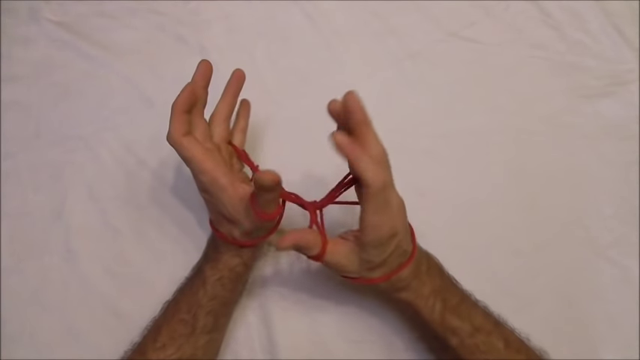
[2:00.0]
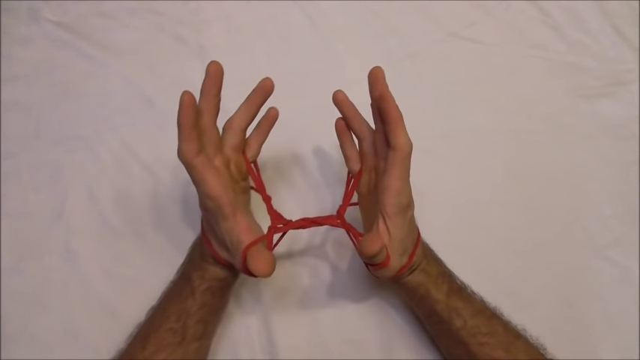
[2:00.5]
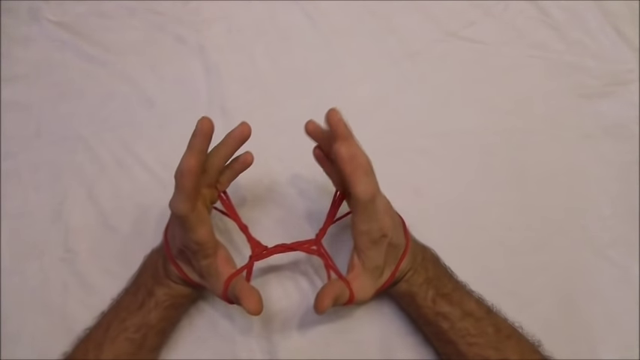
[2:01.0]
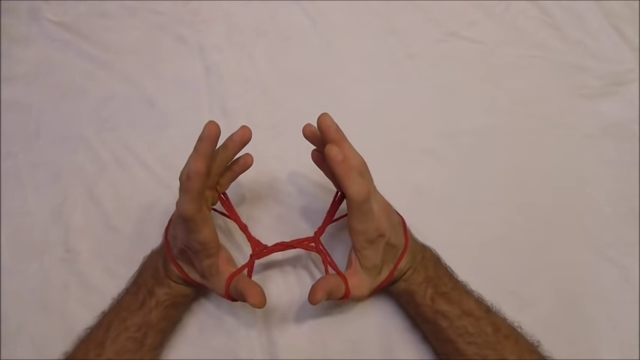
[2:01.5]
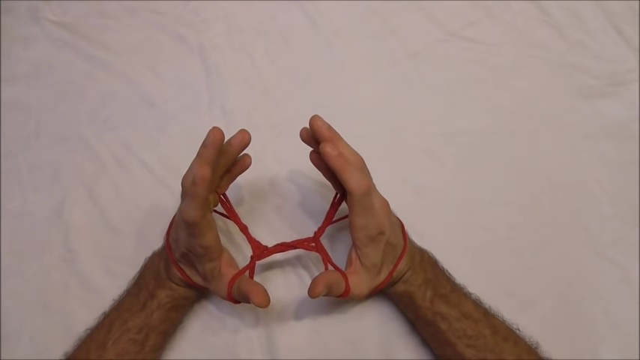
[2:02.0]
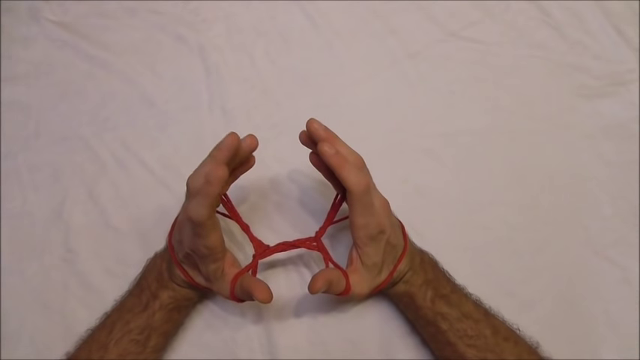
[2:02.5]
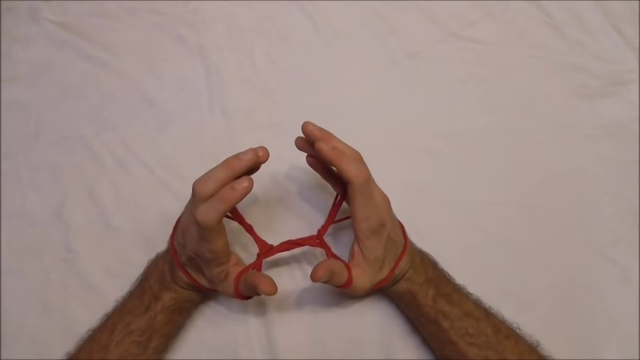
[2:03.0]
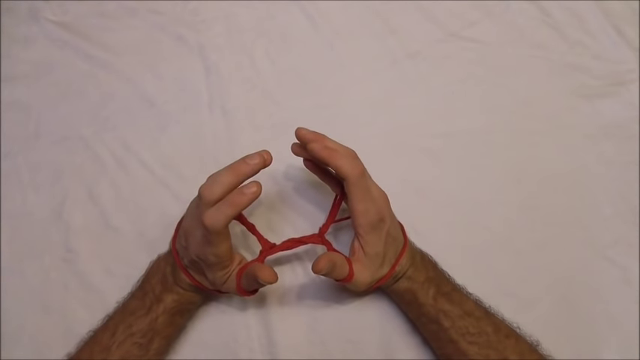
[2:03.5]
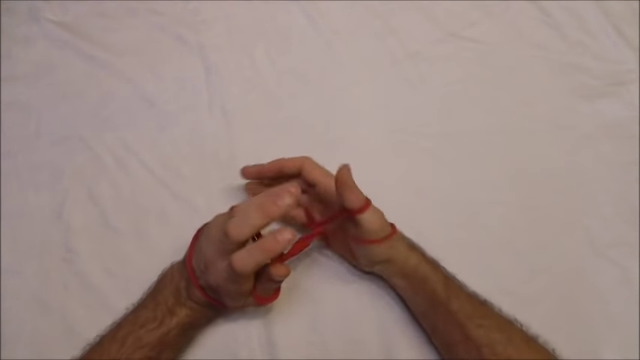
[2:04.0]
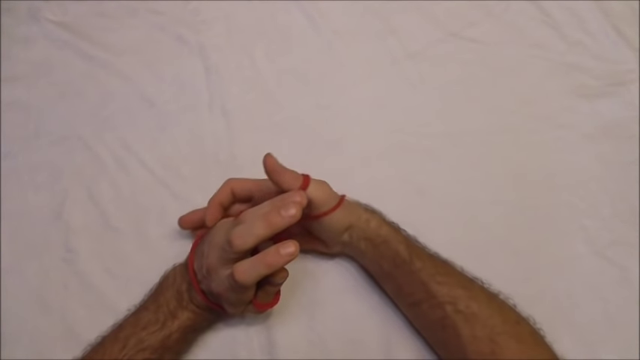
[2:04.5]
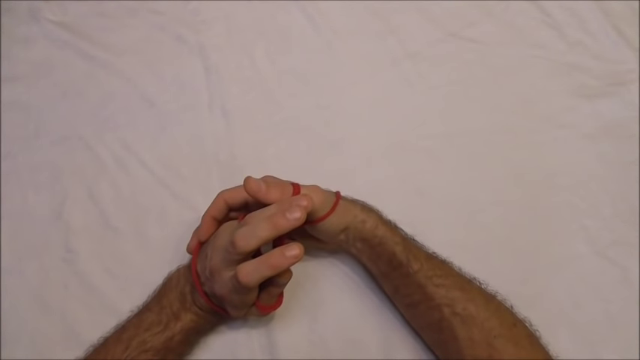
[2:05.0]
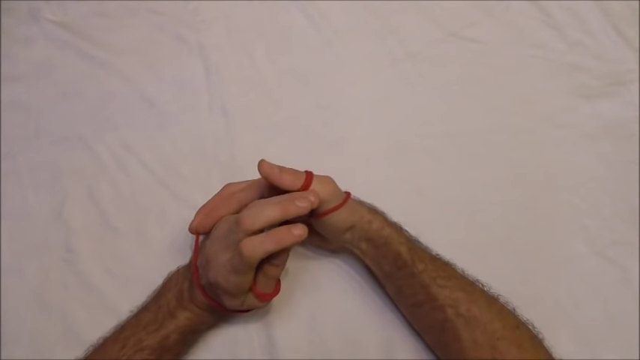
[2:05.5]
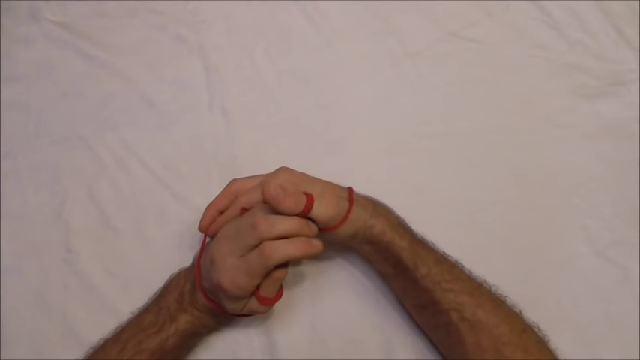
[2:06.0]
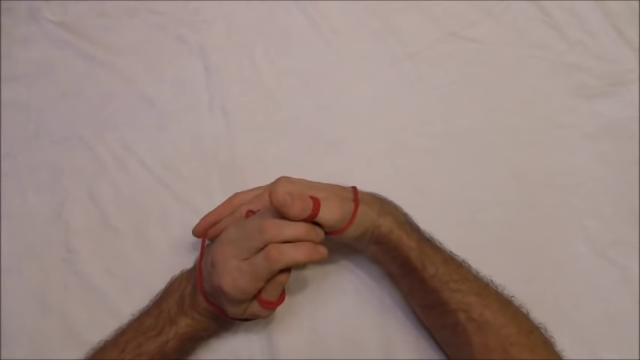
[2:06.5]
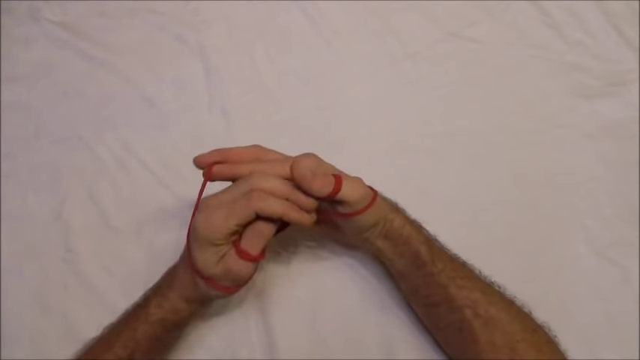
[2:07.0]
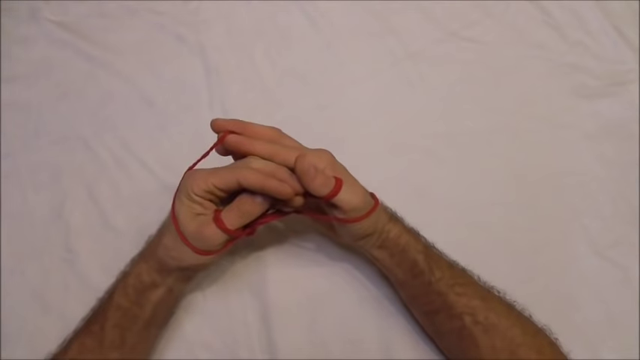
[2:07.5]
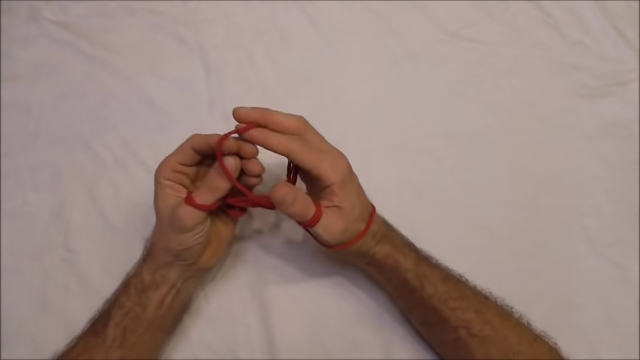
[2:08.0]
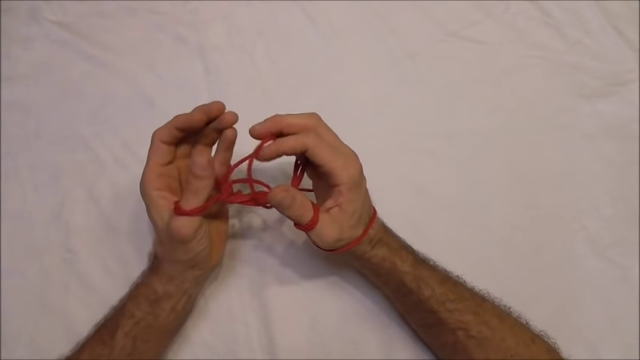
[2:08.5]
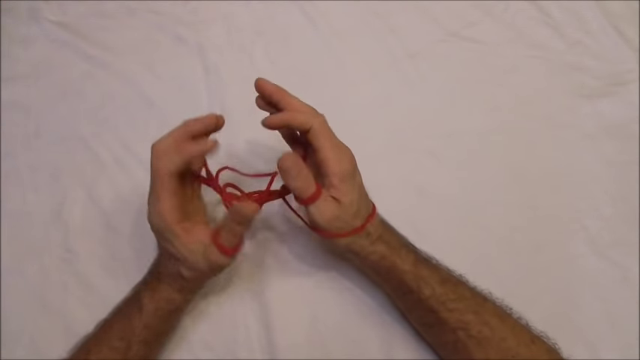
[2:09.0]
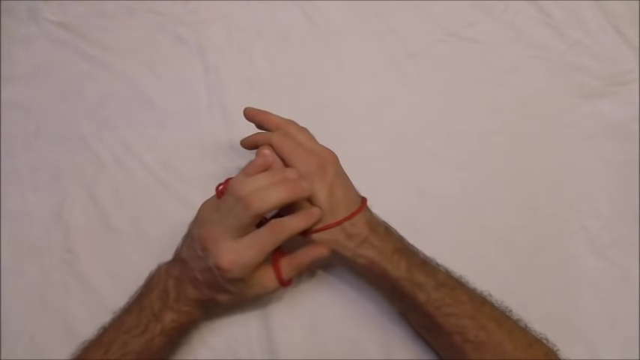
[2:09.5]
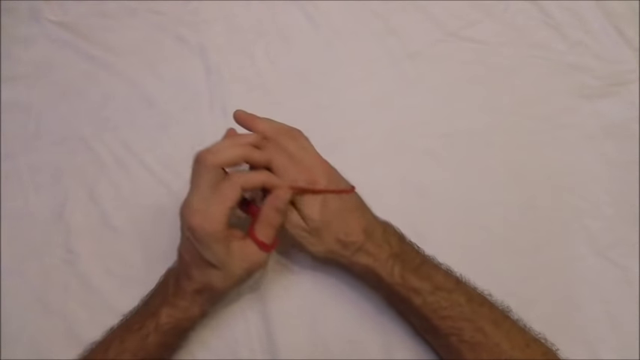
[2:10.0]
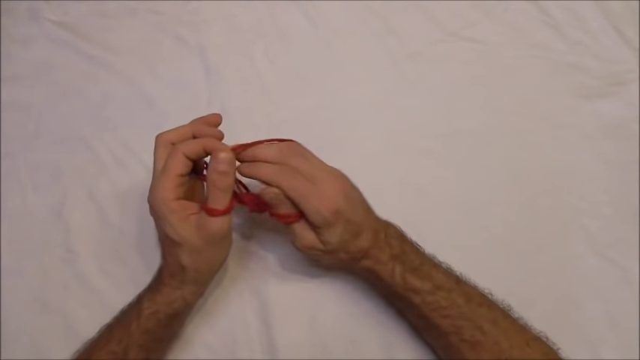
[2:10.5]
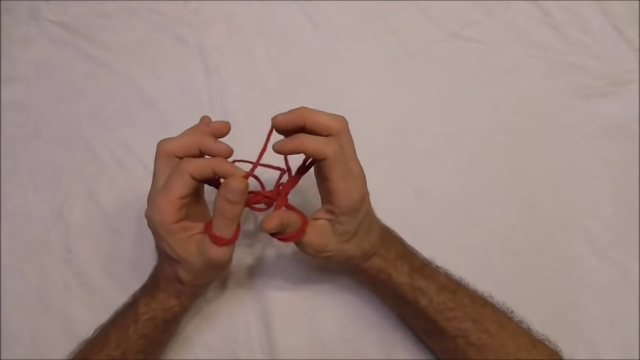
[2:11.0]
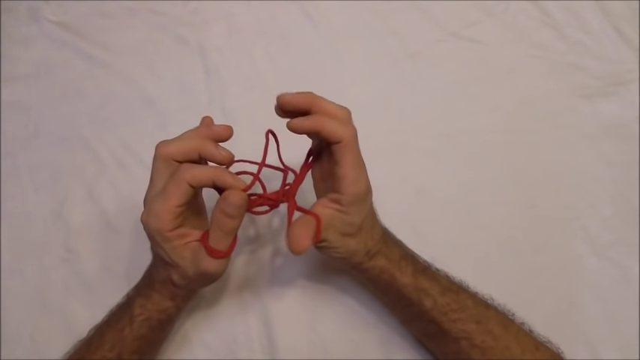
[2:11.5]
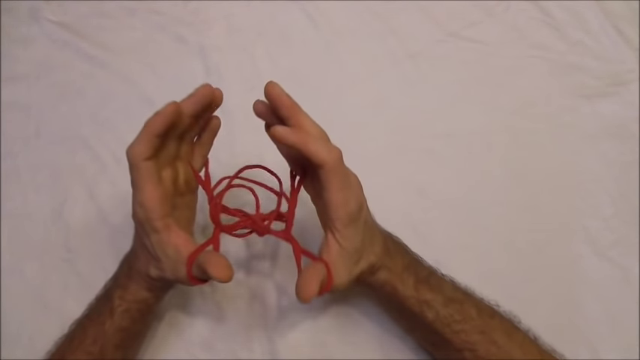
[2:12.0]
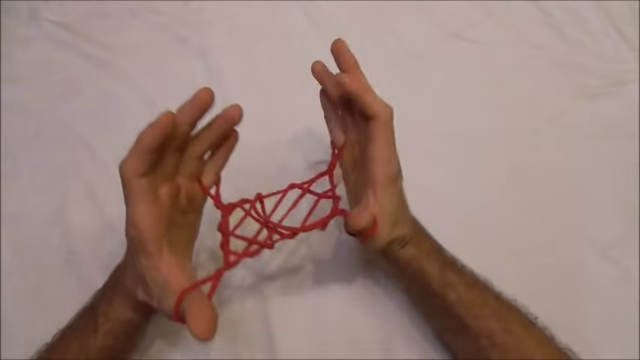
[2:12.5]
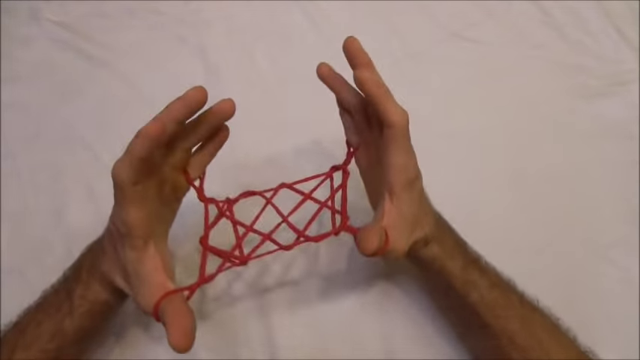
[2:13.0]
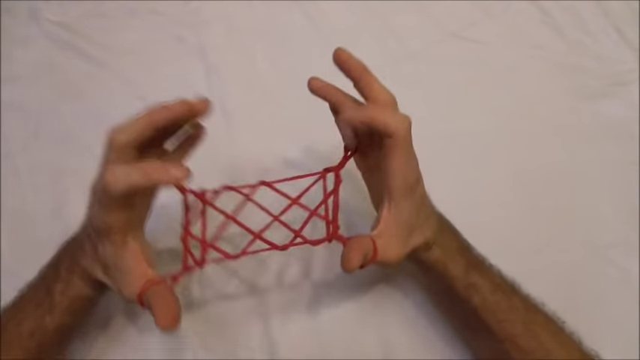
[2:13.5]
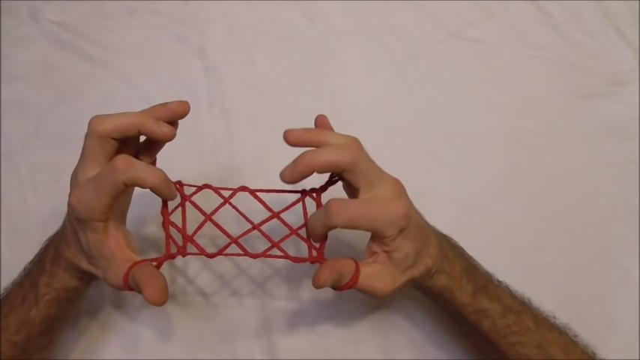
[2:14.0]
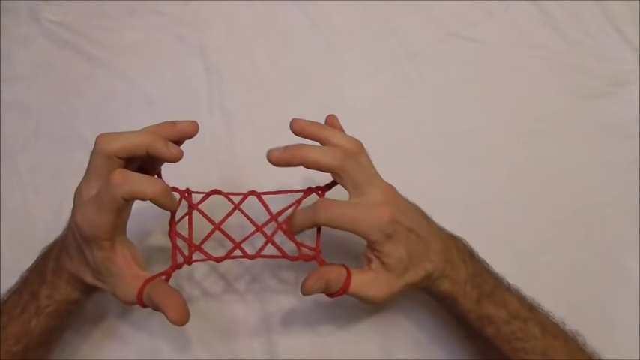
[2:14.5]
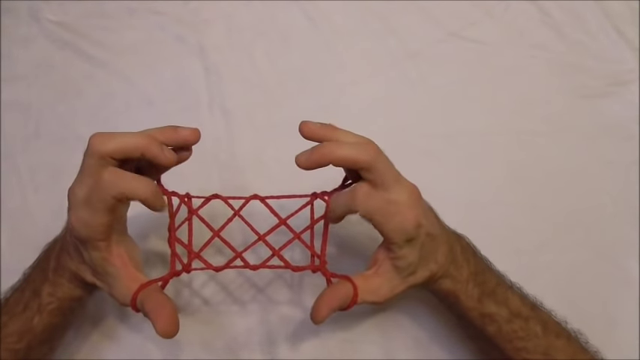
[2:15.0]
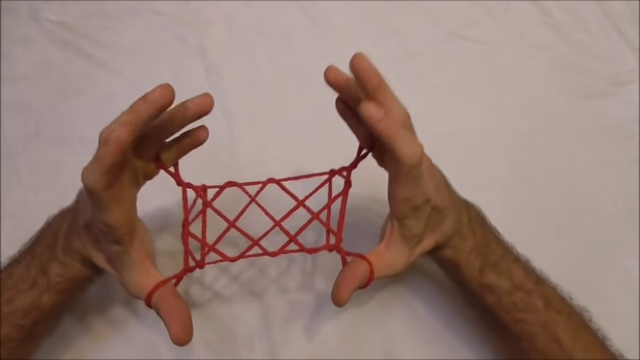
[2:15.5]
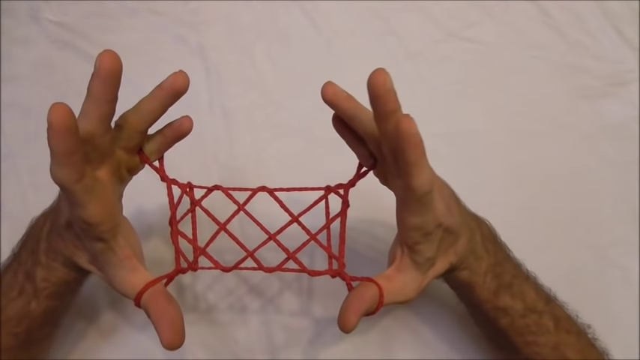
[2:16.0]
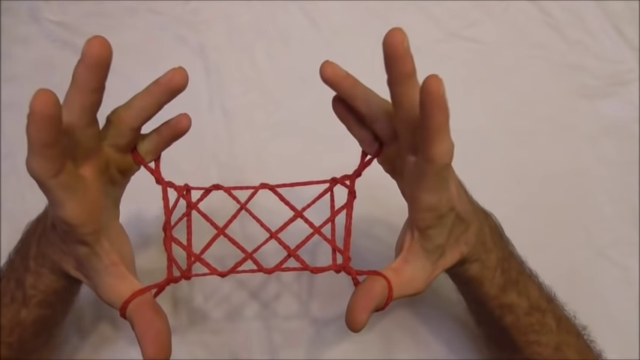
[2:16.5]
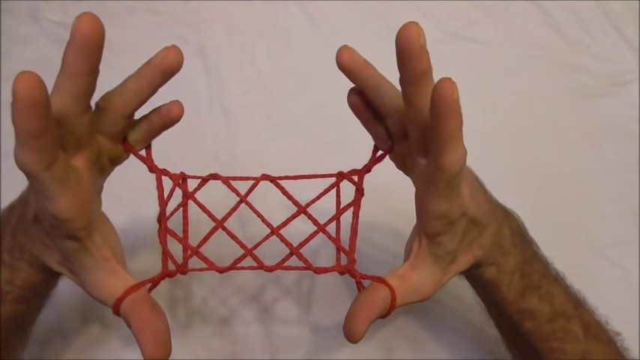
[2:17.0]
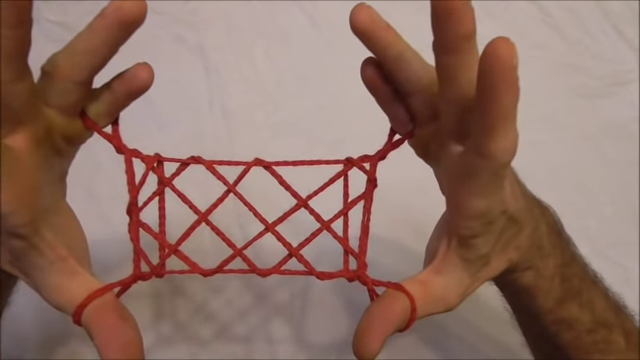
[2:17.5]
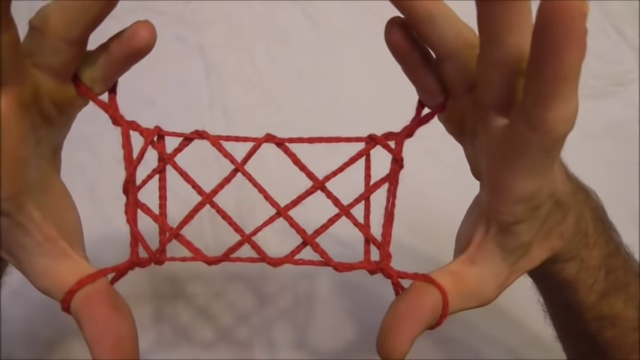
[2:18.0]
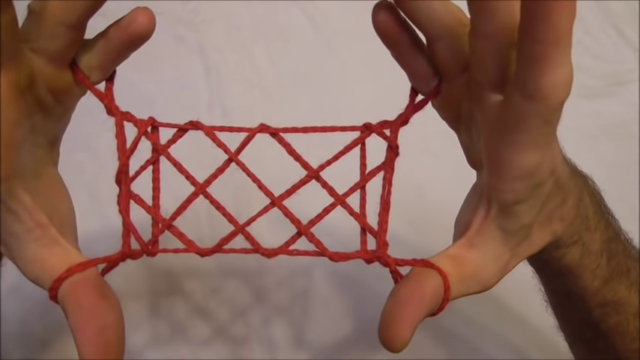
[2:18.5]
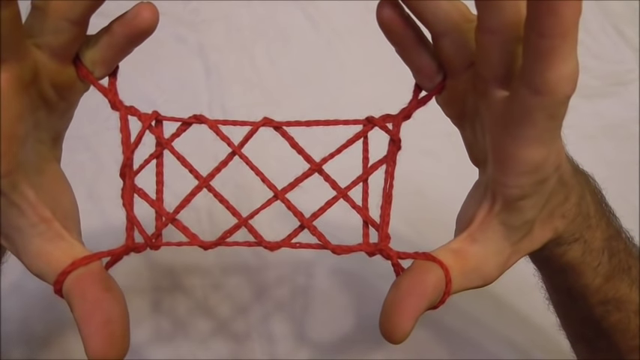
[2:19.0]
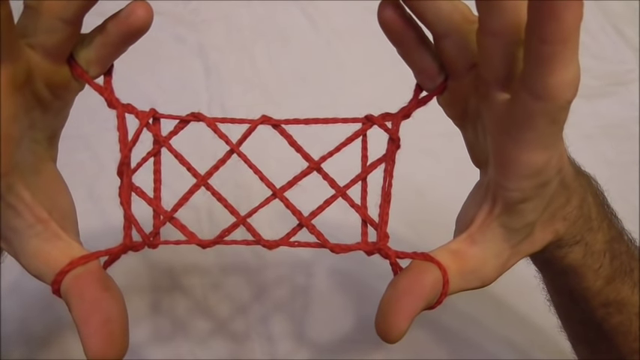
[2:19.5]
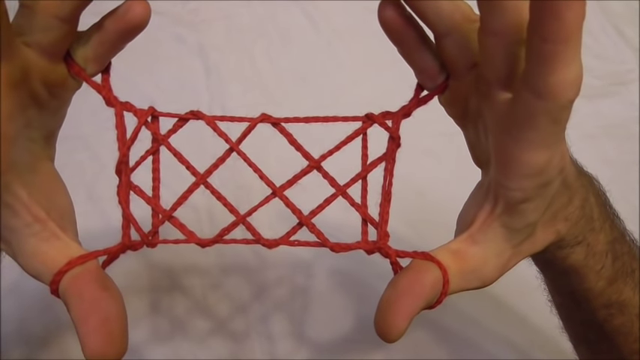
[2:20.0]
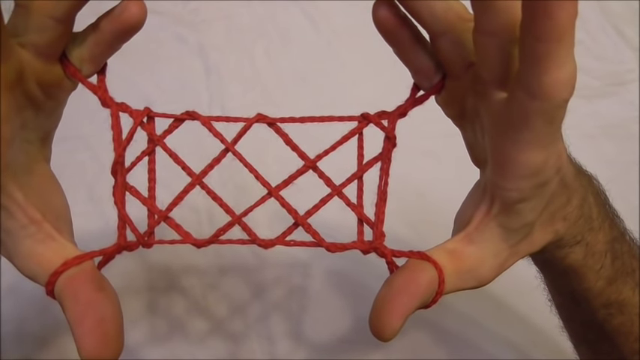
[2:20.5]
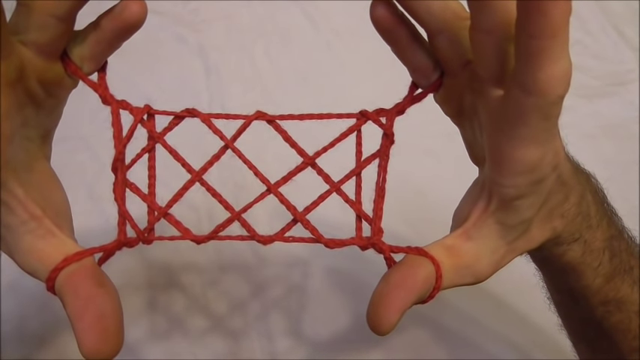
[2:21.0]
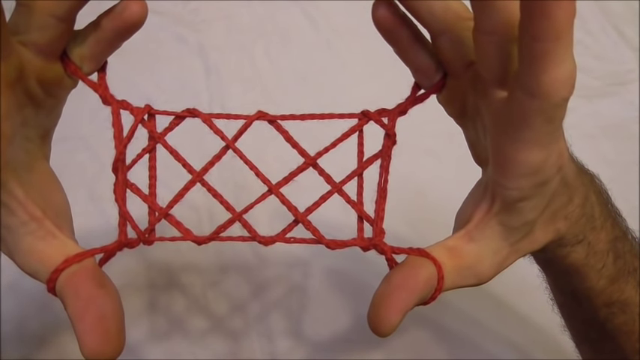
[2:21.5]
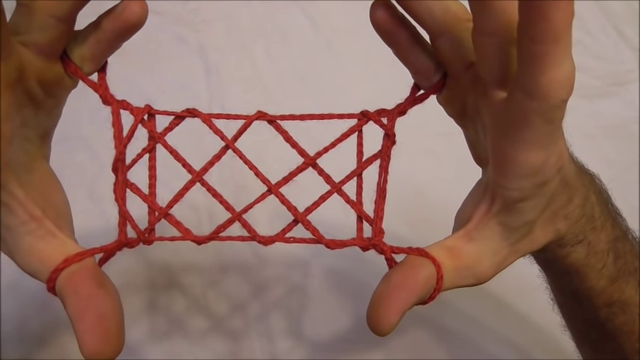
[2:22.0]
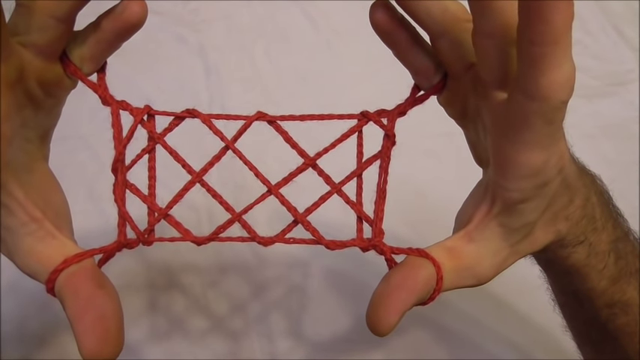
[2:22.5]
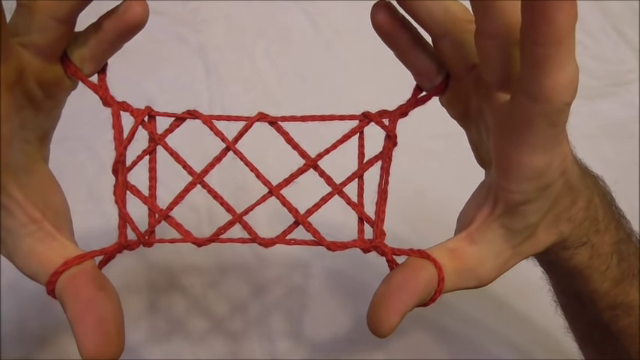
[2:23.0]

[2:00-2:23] Against the white linen background, the man opens his left and right hands again, now with a single string going across that is wrapped around multiple other strings, and his hands still wrapped with the red string. He uses his right pointer finger to grab a piece on his left hand and take it off, then repeats the process to take another piece of the red string off. Now only his thumbs and pinkies are inside the strings. He opens up to reveal the original square, rectangle pattern seen at the beginning. He corrects the pattern by pointing one of the pointer fingers of his right hand into the middle of the red pattern. He then lifts his hands up from the white background and lets the pattern come closer to the camera.